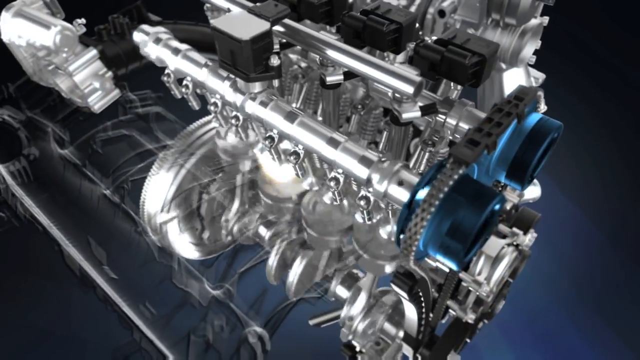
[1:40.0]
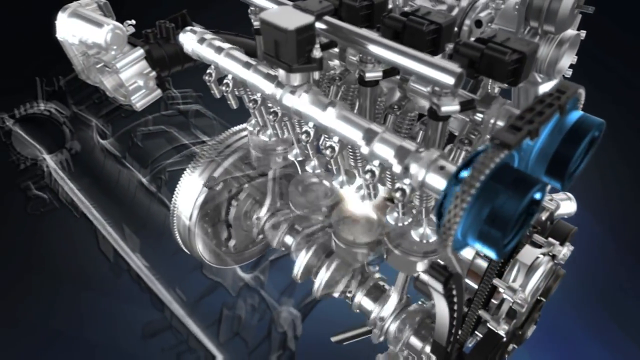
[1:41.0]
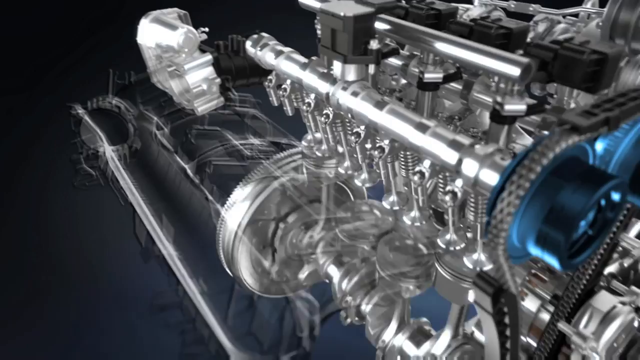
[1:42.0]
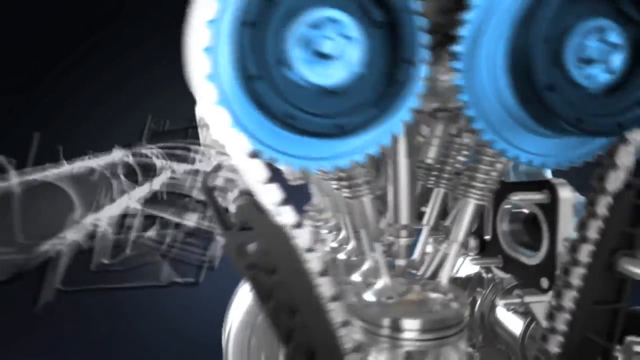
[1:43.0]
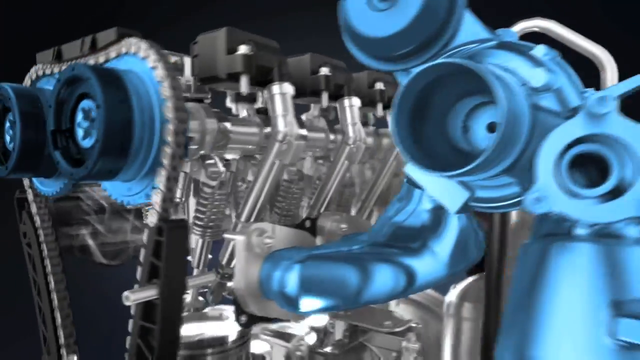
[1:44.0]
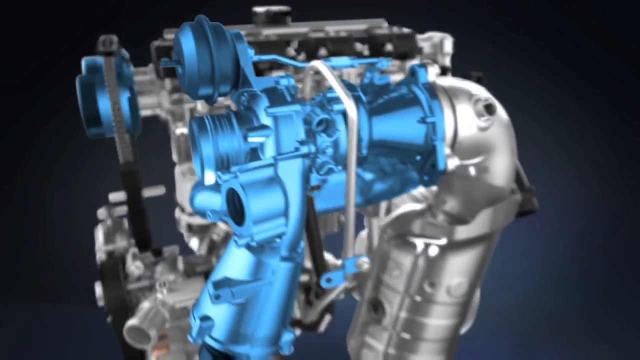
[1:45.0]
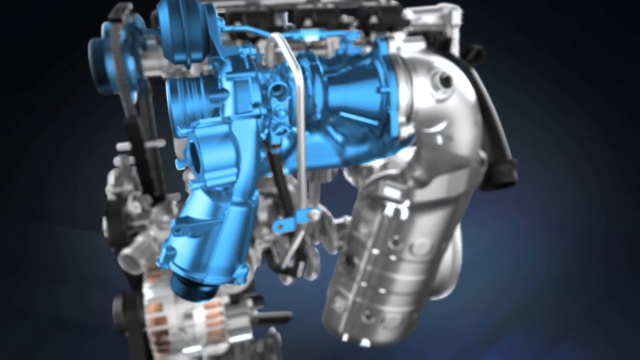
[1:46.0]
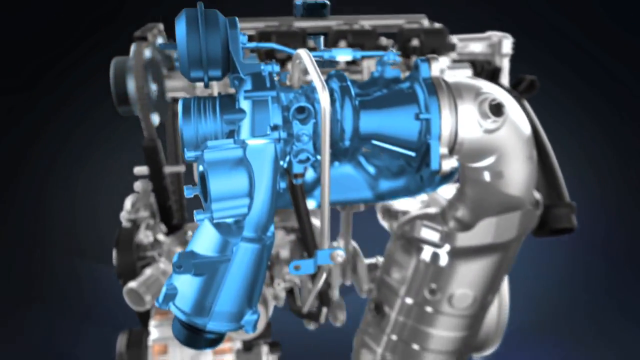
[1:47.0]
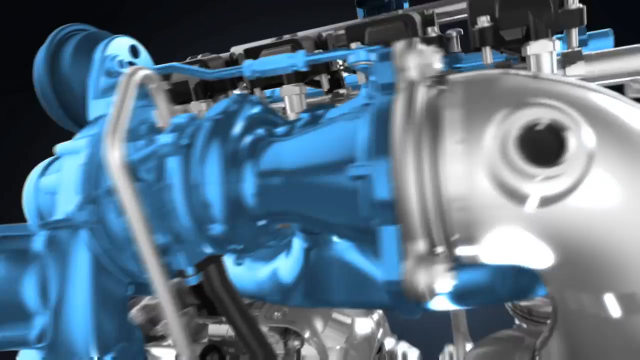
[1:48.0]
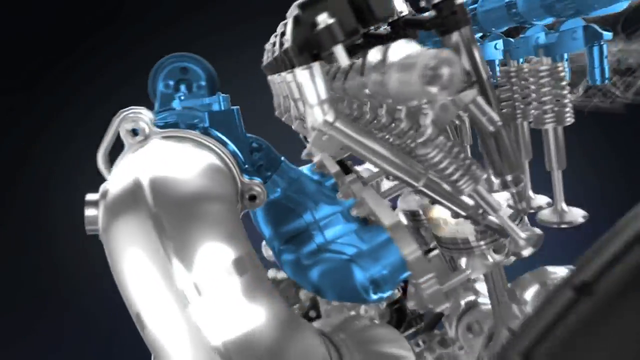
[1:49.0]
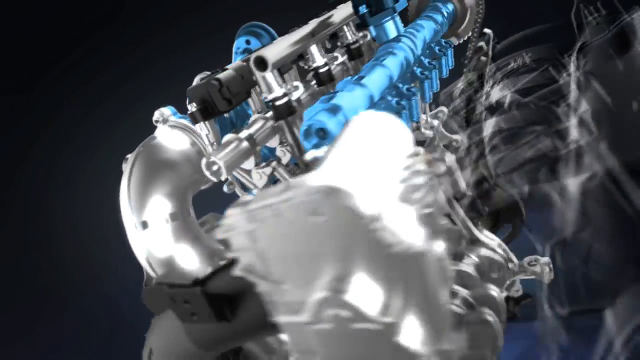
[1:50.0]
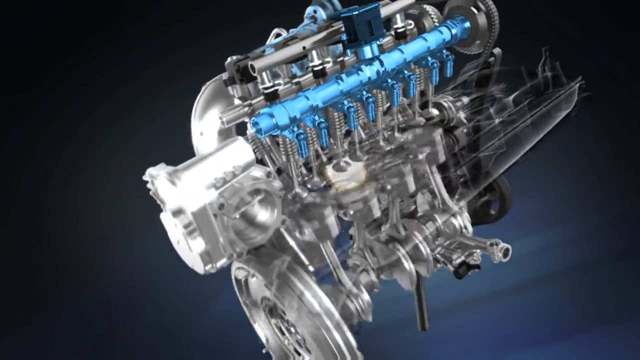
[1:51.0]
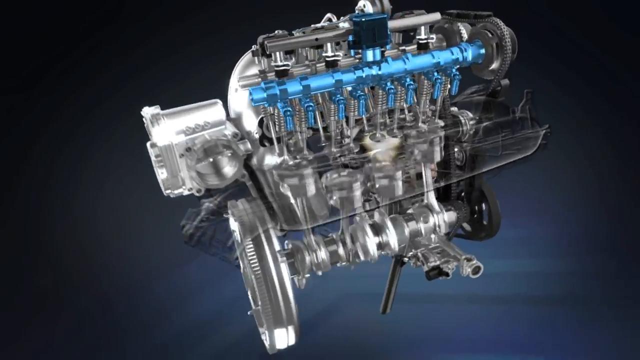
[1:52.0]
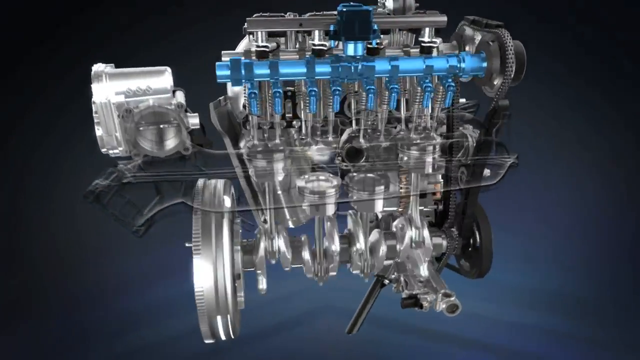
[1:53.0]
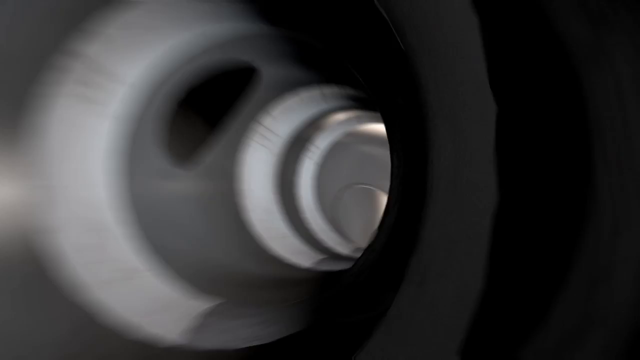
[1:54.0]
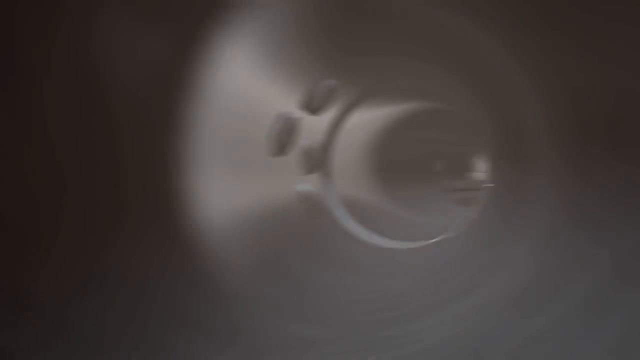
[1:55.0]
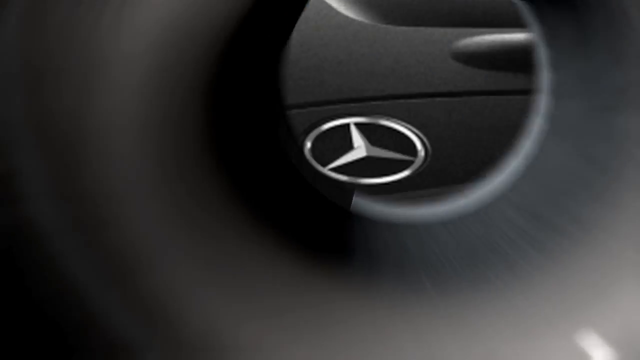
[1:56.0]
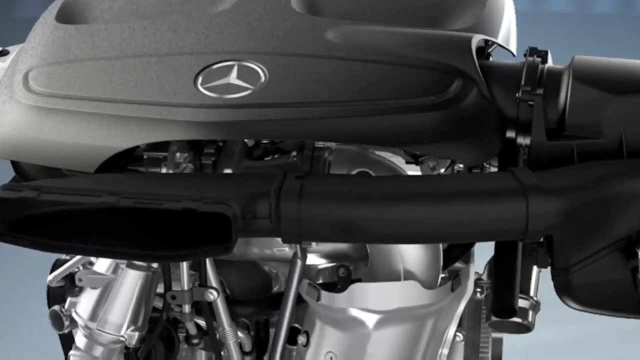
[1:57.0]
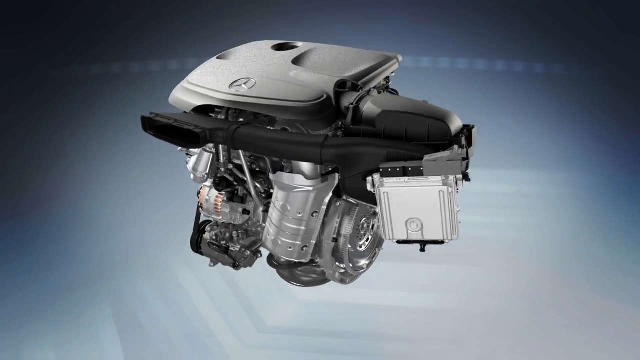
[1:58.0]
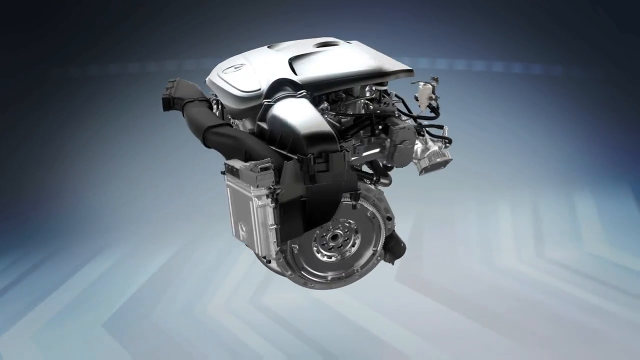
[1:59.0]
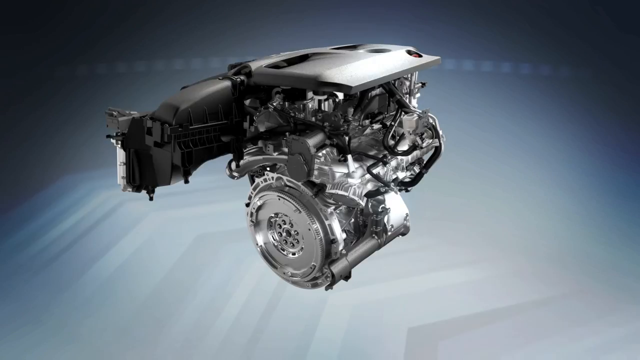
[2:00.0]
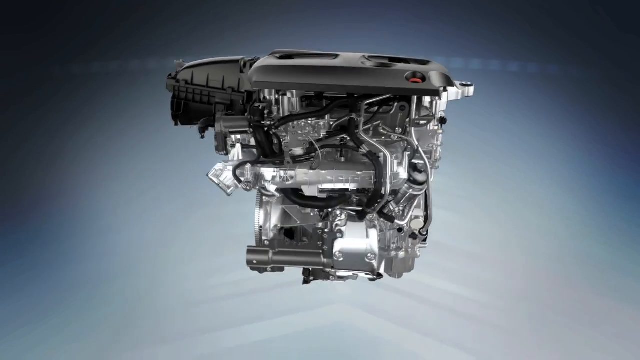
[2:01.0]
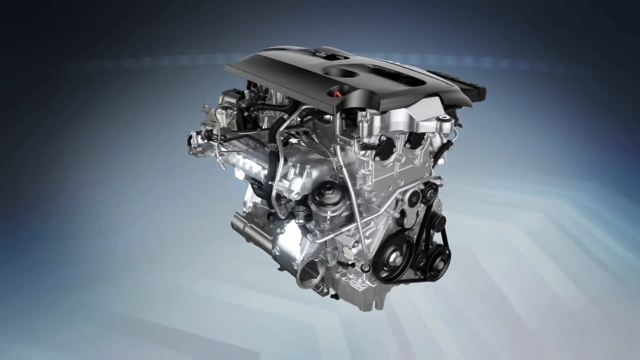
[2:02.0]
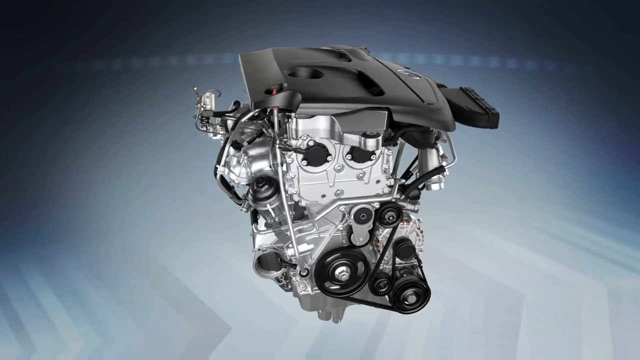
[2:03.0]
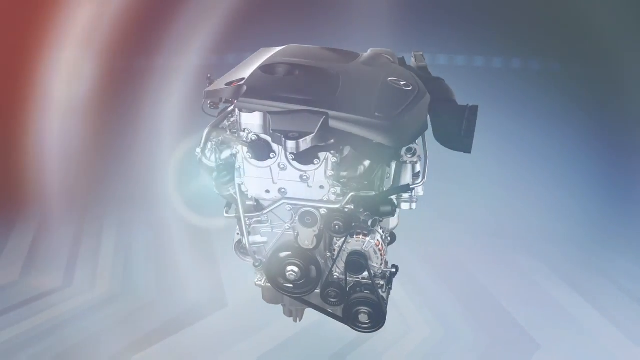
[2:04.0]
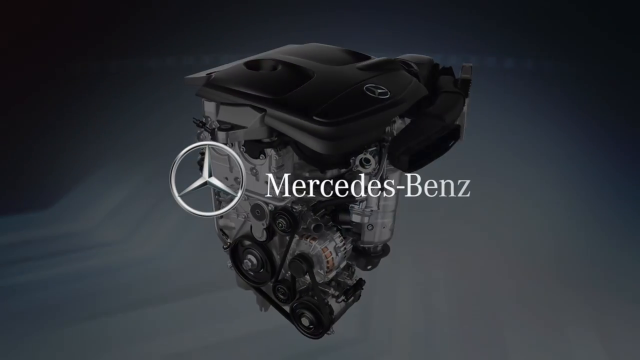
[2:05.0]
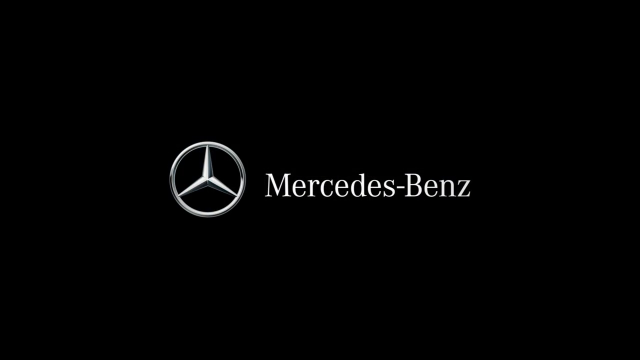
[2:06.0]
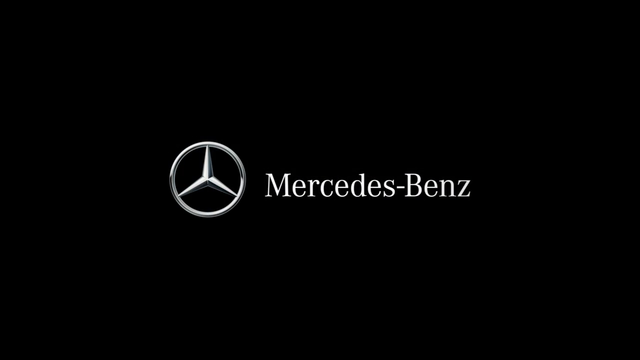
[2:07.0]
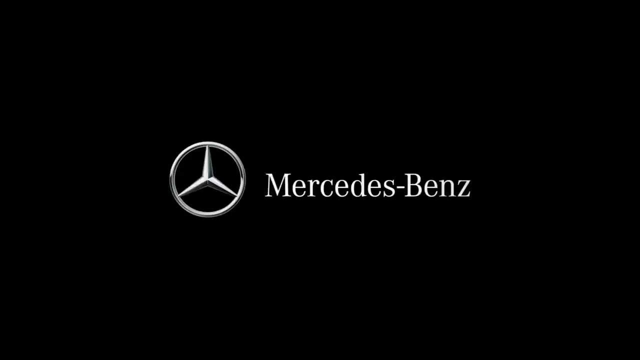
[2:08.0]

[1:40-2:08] The video shows something like the inner gear system and middle section of an engine. There is a somewhat larger circular area off on the left, and parts of the section are more of a blue color. In one segment the view zooms in and, as the parts spin, travels down a long winding tunnel until it reaches the inner workings of the engine. At the very end, the text "Mercedes-Benz" appears with an emblem that almost looks like a helicopter propeller; there are no other words or website.